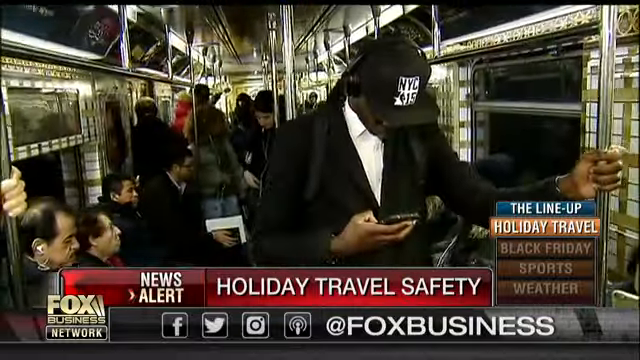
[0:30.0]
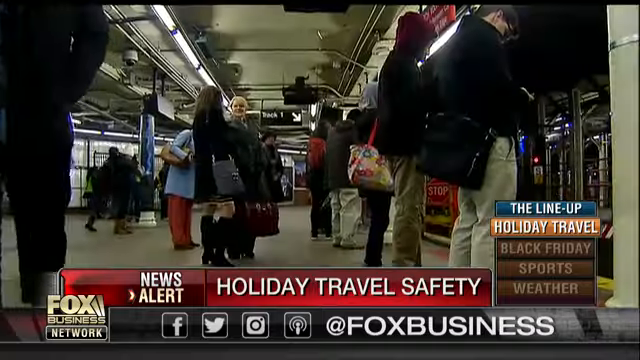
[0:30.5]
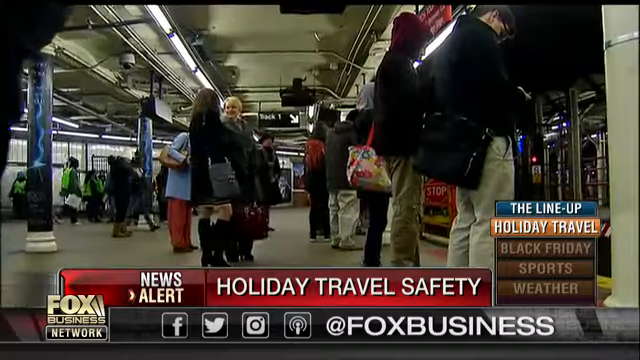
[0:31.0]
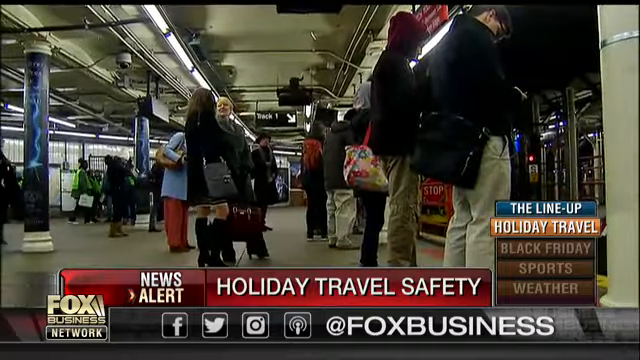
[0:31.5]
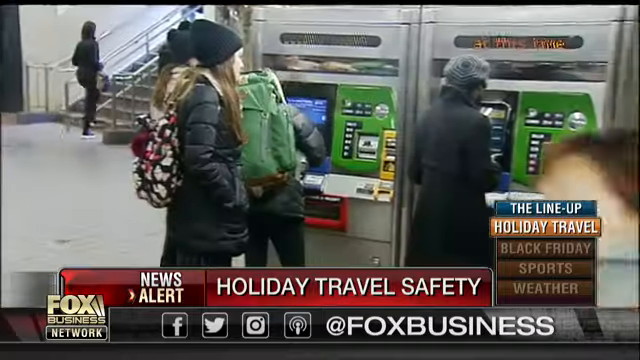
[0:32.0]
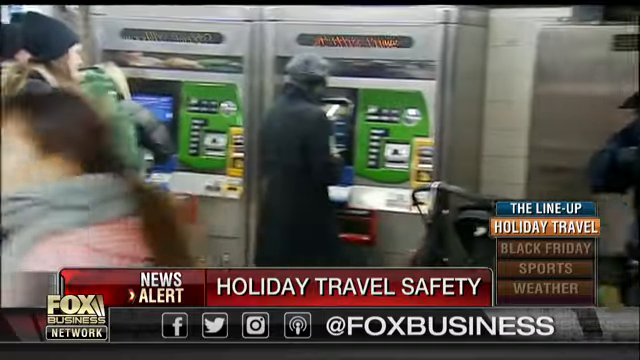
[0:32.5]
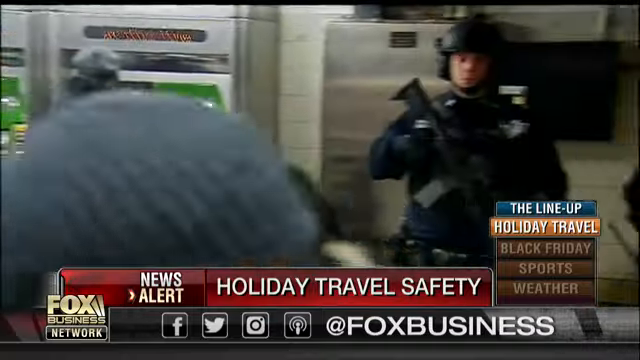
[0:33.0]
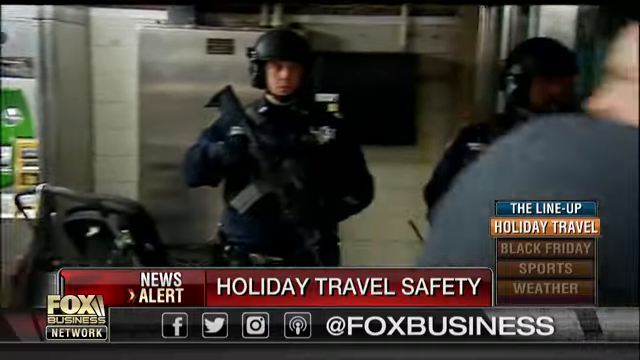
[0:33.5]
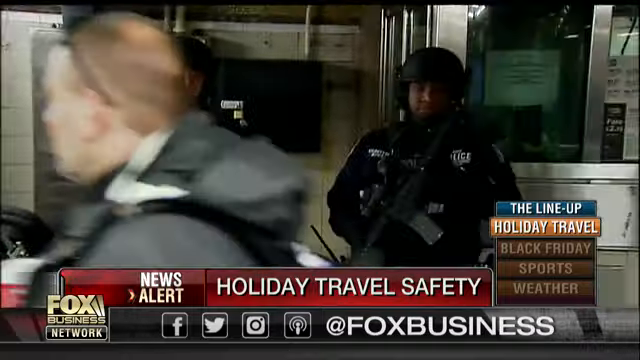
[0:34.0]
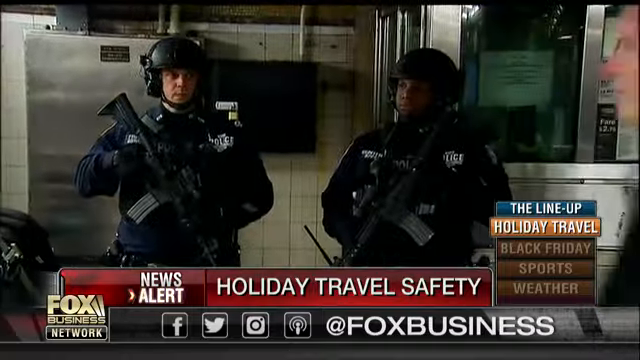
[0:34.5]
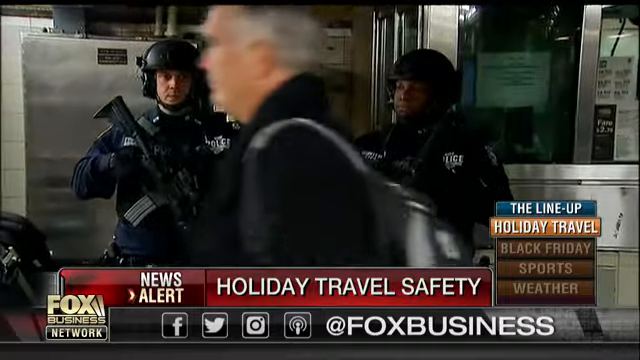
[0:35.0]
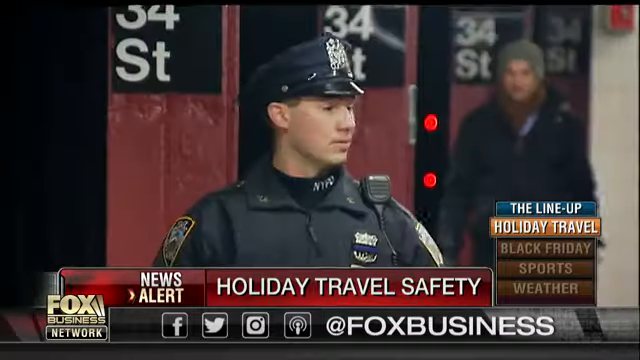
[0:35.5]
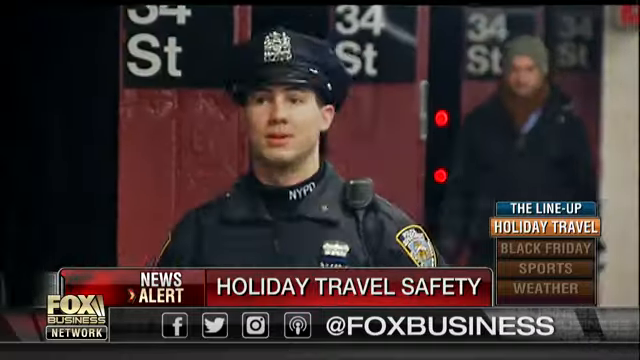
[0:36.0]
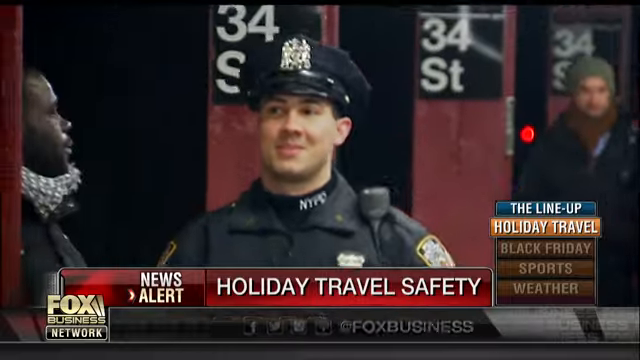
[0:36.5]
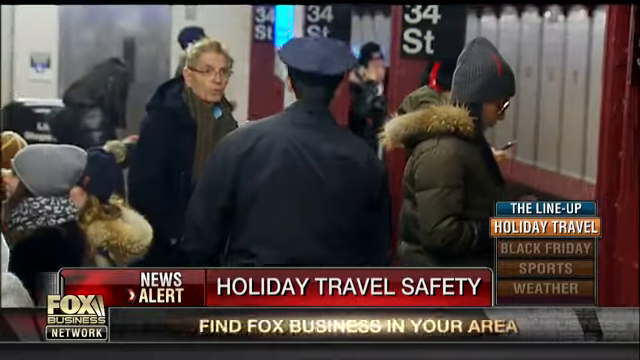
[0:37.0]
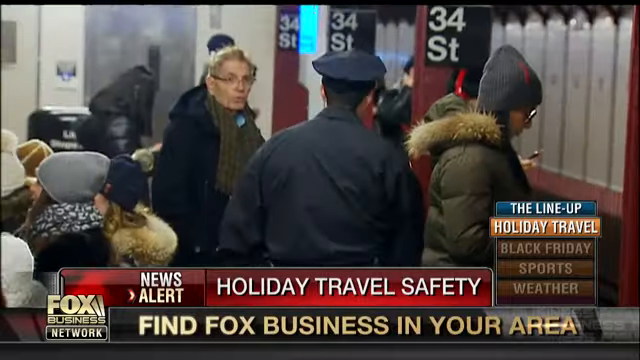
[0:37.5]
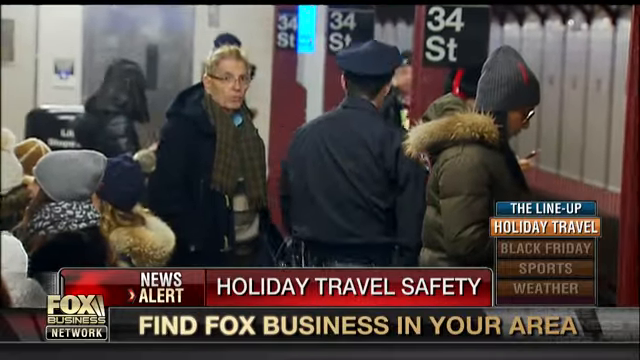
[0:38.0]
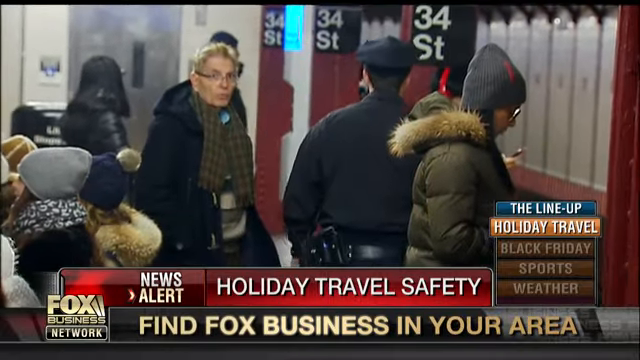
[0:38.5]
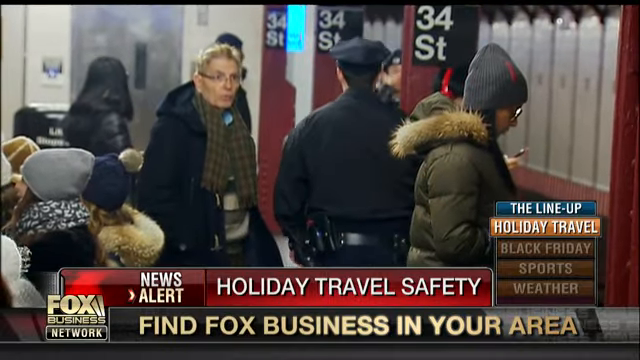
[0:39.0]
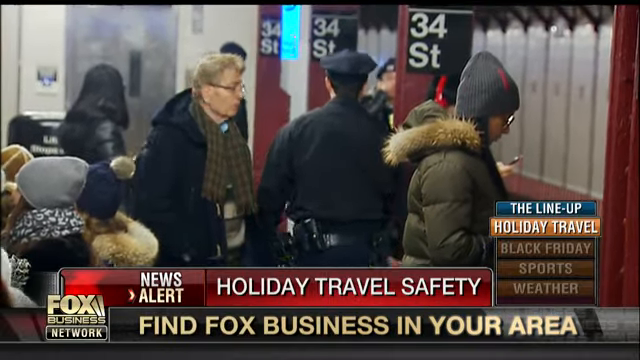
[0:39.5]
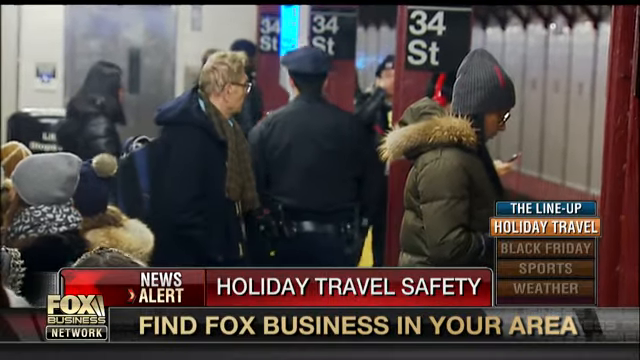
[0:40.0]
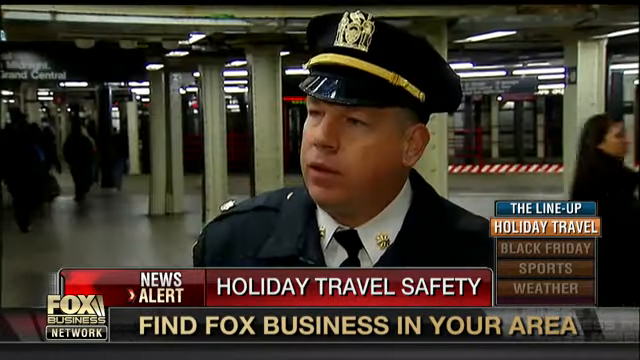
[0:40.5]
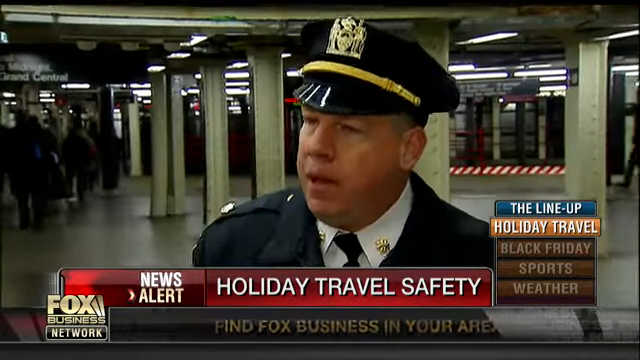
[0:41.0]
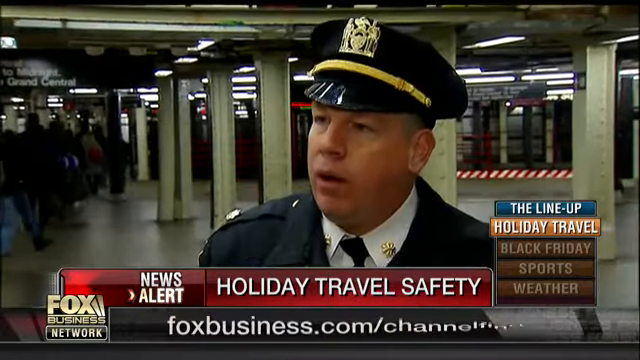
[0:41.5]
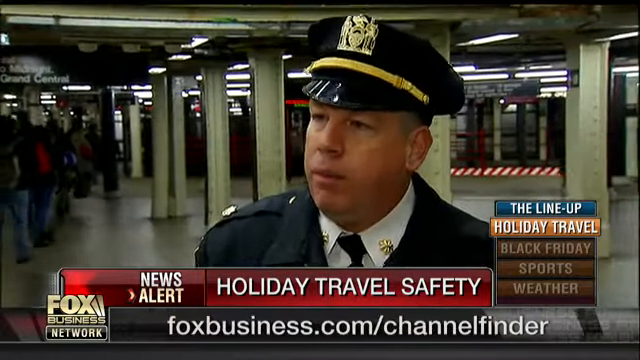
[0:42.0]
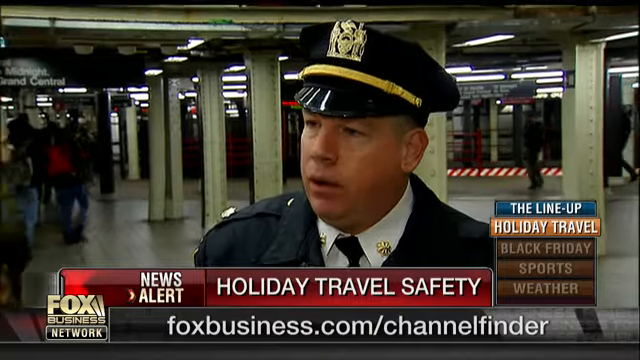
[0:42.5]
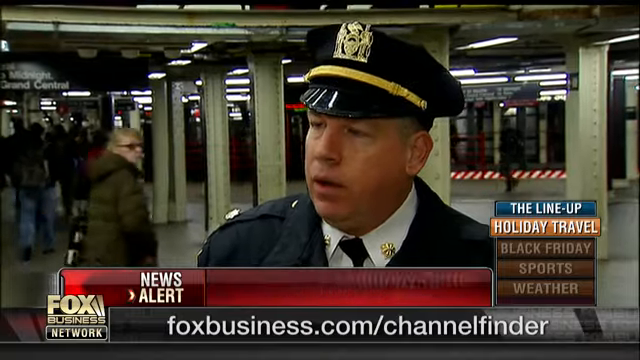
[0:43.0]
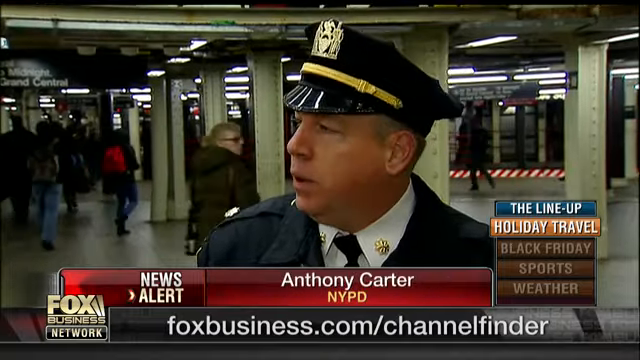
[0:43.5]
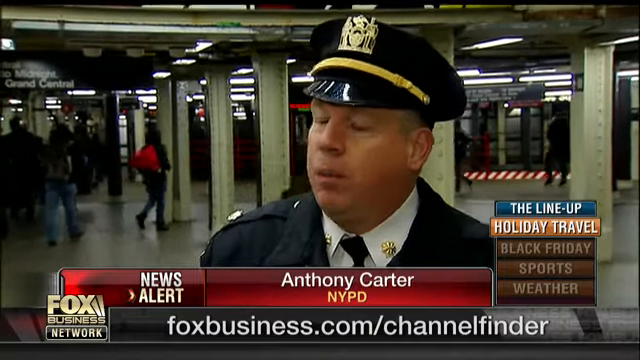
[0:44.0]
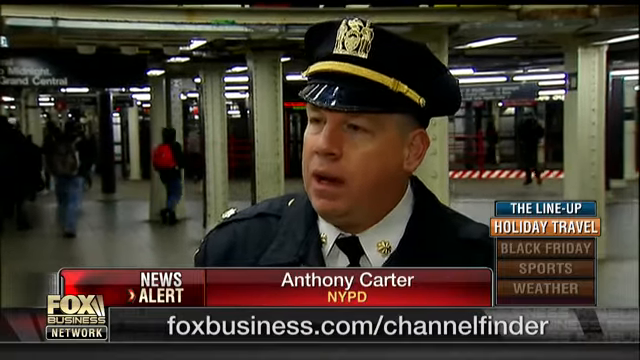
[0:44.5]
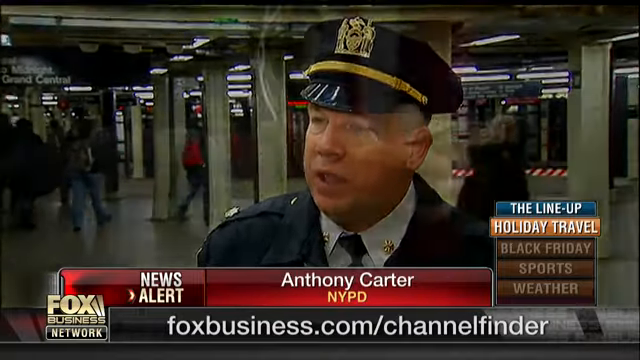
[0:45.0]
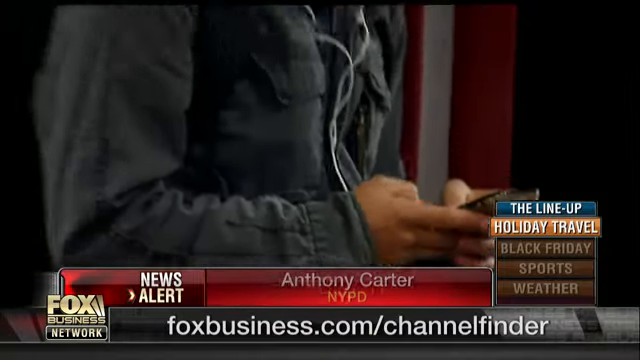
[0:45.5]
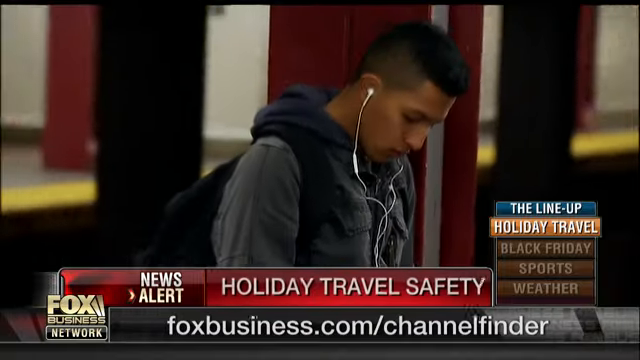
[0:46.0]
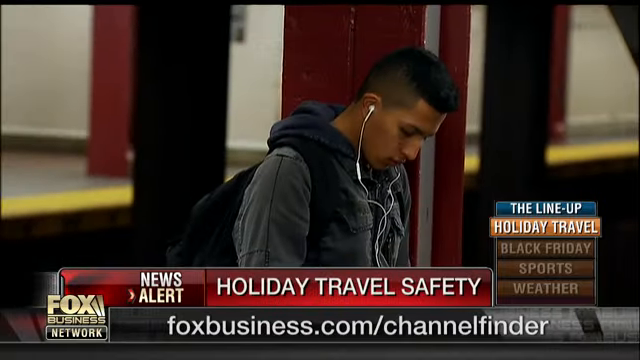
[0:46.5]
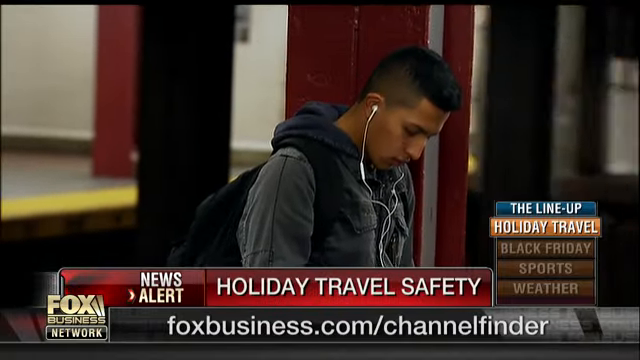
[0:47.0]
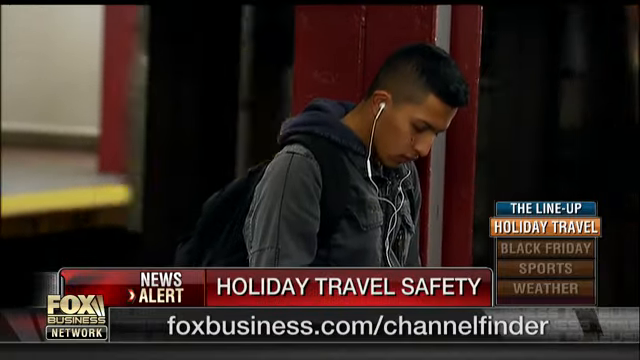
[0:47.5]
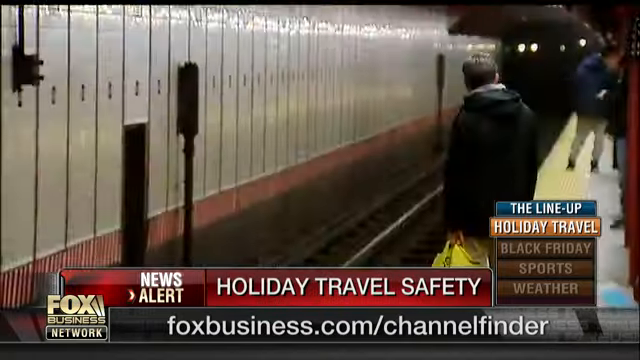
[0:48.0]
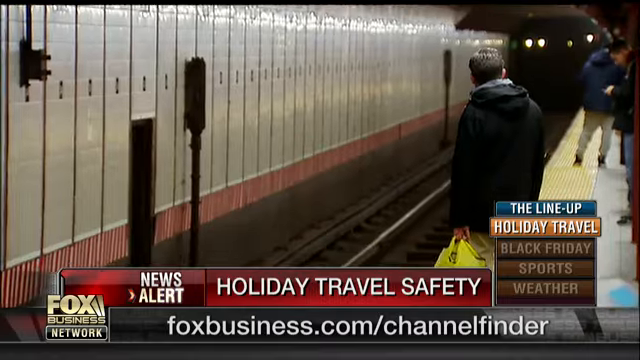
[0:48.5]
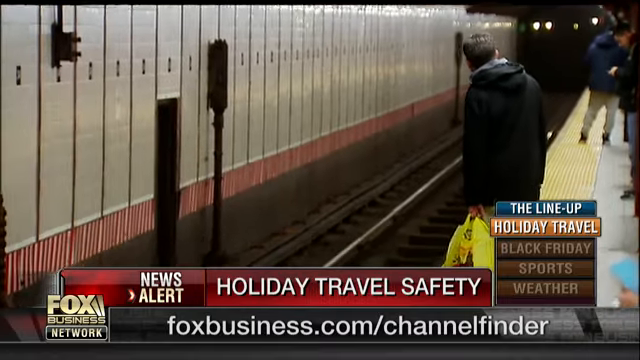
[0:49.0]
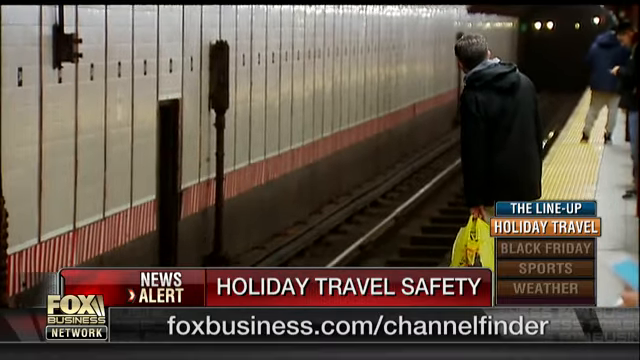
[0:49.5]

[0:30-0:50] Inside the subway train, a black man wearing a cap with NYC on the front is on his mobile phone. The subway carriage is pretty busy. Words on the screen indicate a news alert about "holiday travel safety". The shot cuts to a busy subway platform with people all around carrying bags, then to some ATM machines, all occupied by people, with a guard who looks like police manning them. Next an NYPD officer walks and smiles, then walks off into the subway with the camera behind him. The next shot shows an officer talking to the camera, named as Anthony Carter, NYPD. Another shot follows of a man on his mobile phone, wearing headphones.